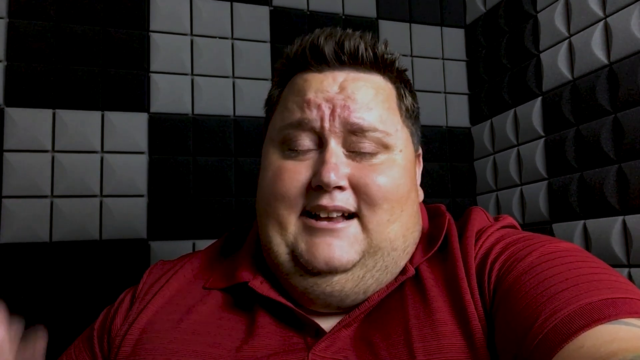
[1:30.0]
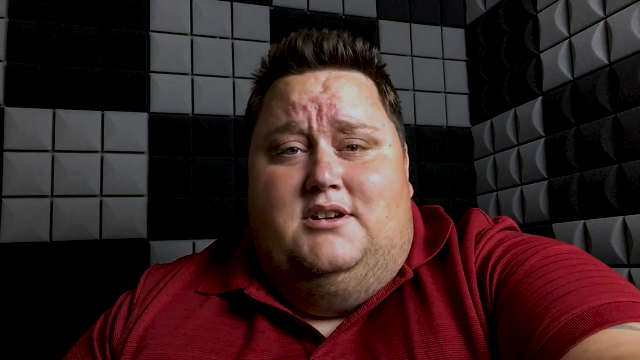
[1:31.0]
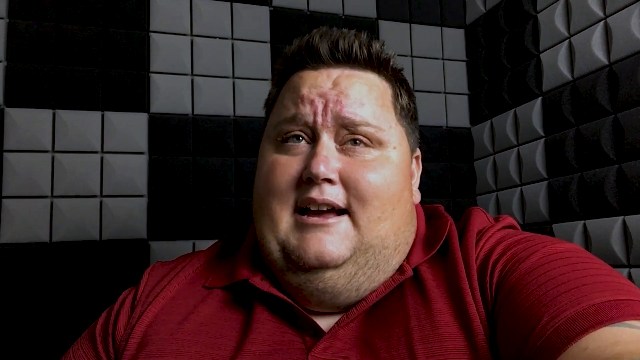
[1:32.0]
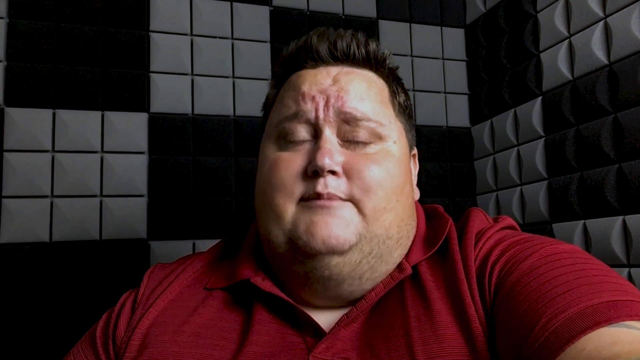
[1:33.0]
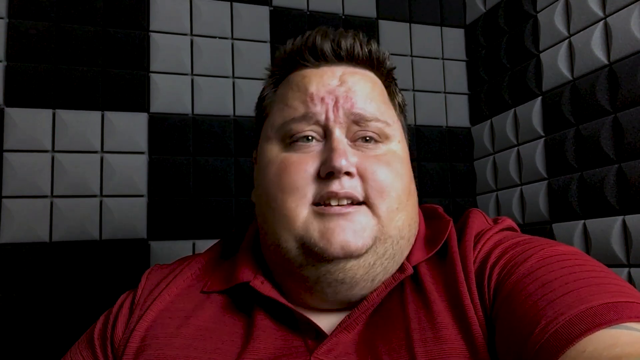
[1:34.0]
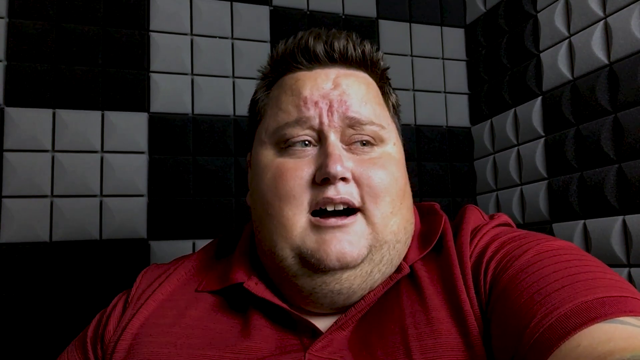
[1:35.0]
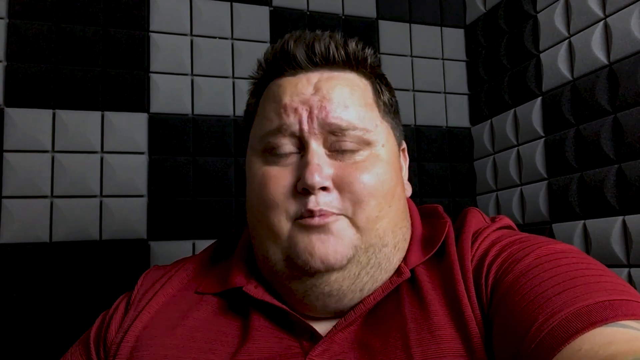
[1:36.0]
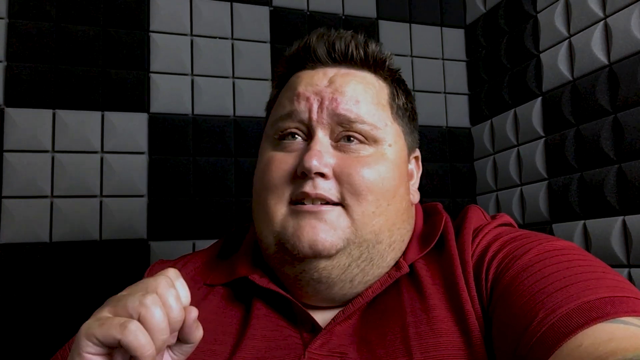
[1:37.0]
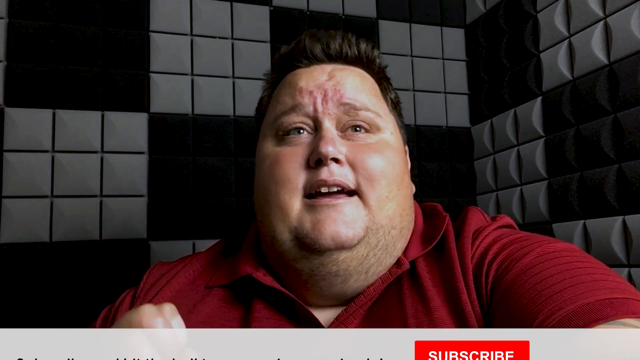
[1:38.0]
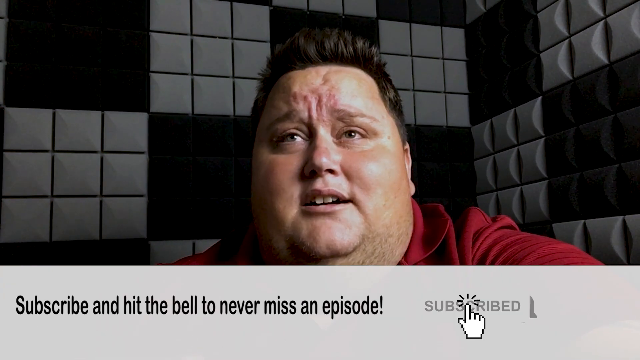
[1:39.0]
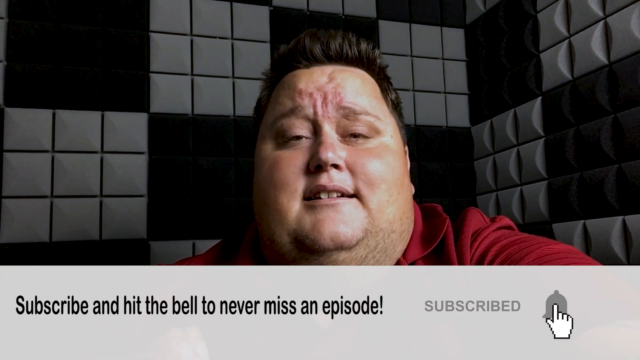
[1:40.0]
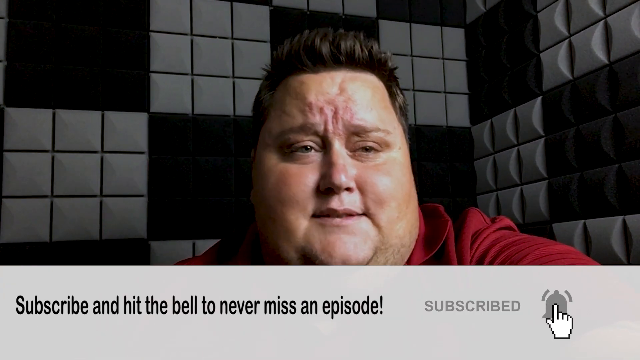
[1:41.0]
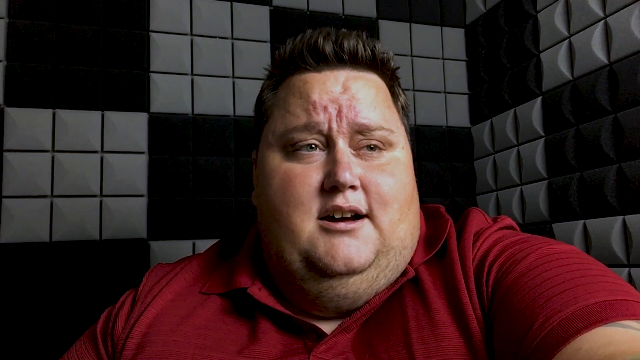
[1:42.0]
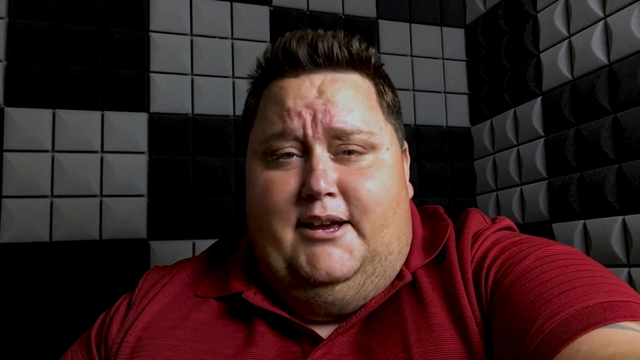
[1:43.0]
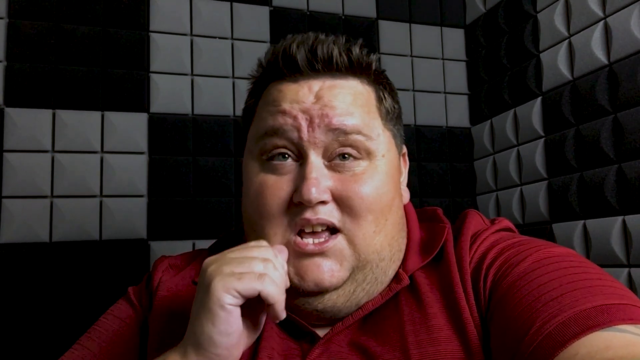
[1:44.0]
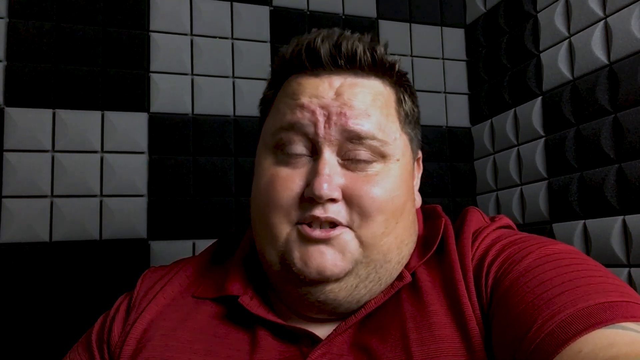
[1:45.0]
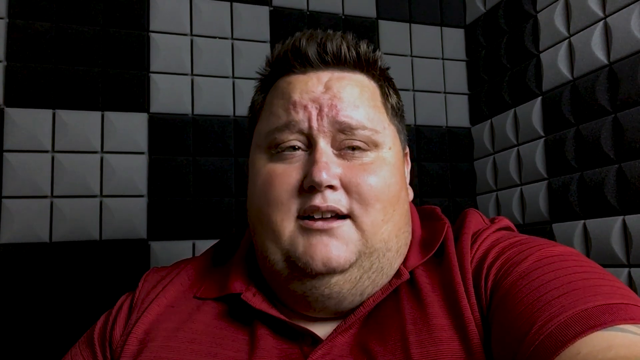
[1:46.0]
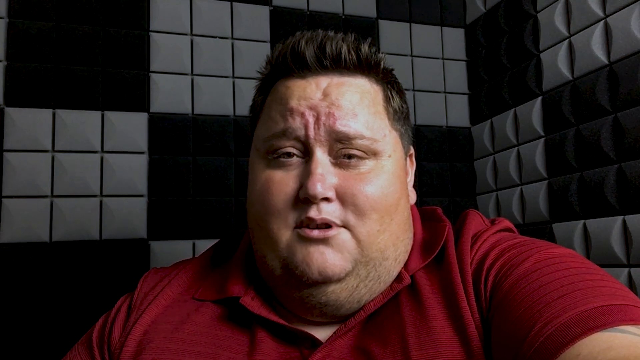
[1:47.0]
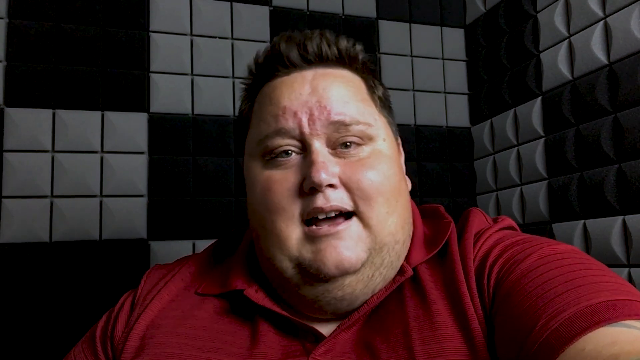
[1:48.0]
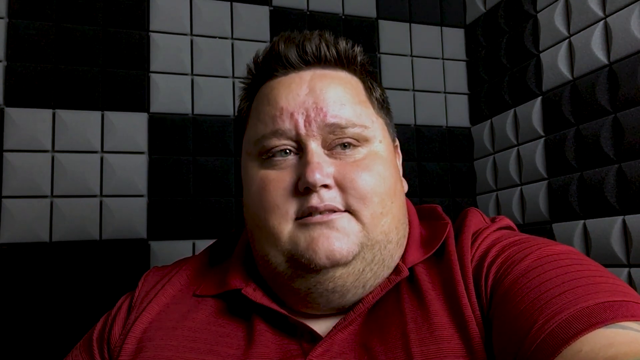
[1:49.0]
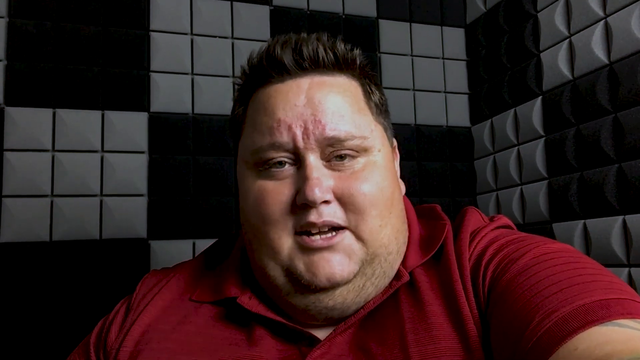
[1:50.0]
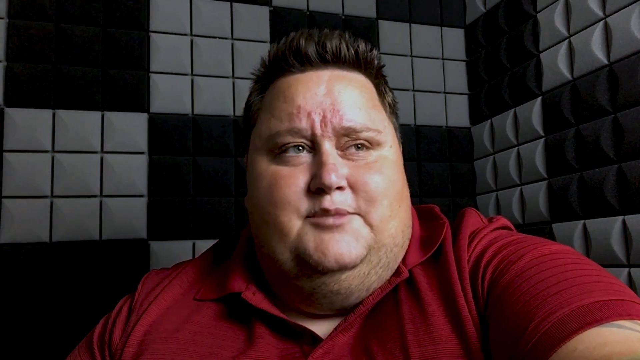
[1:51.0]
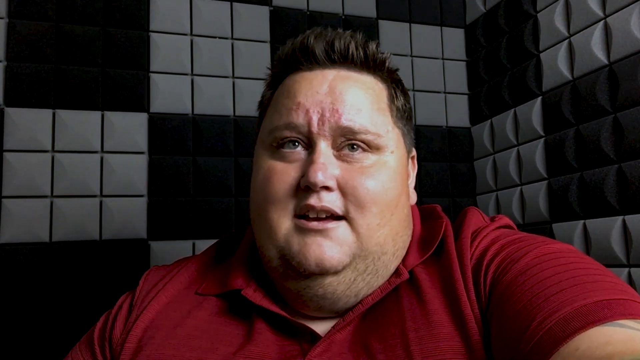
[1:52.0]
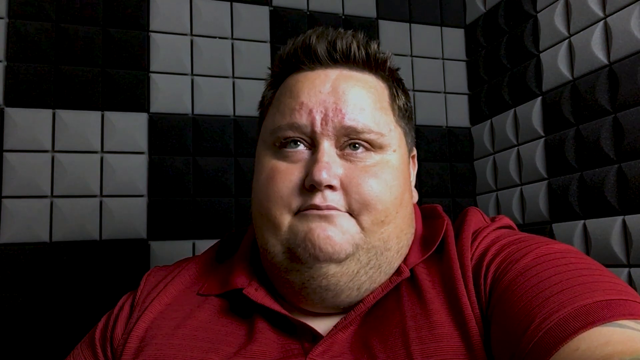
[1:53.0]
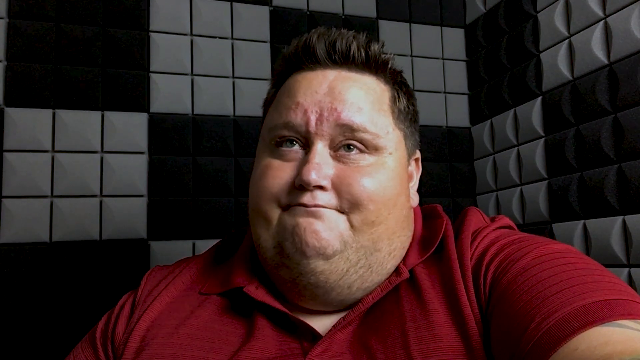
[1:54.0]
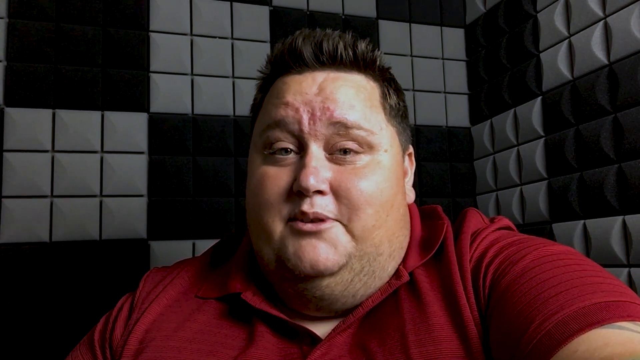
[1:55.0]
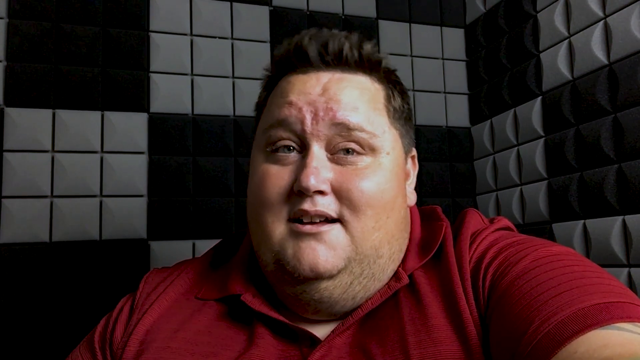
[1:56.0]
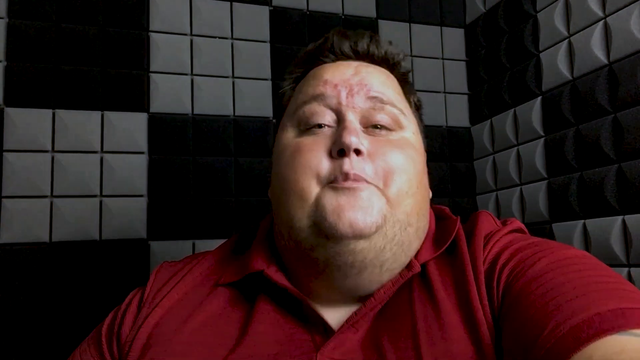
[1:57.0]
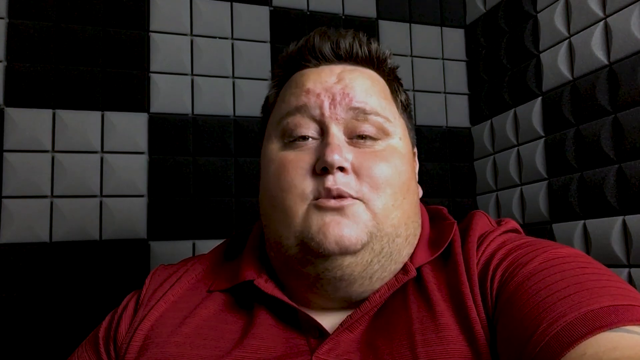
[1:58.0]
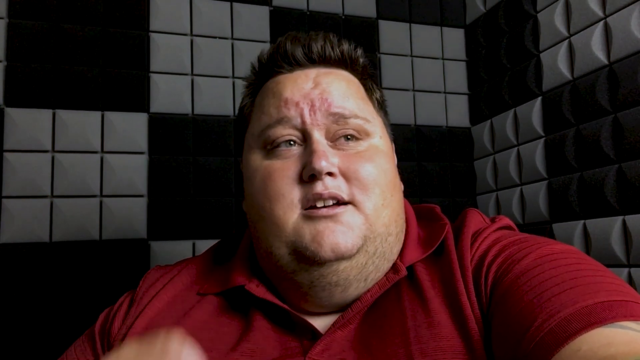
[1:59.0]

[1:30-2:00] The obese man is in a dark room with tiles behind him. A banner with a white background pops up at the bottom of the screen with black text reading "subscribe and hit the bell to never miss an episode", with a quotation mark at the end. Next to it is a gray subscribe button, and a hand icon clicks on it. A bell is at the bottom right, and the hand icon moves to it; the bell is gray and the hand icon is white. The hand clicks the bell icon, then moves off and disappears to the right, and the banner disappears by sliding down. The man puts his finger close to his nose, then drops it as he continues talking to the screen and looking out of the screen. He squeezes his mouth in dismay, seeming unhappy, and then points a finger at the screen.